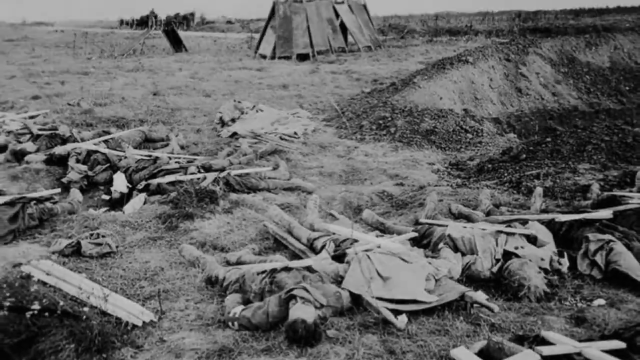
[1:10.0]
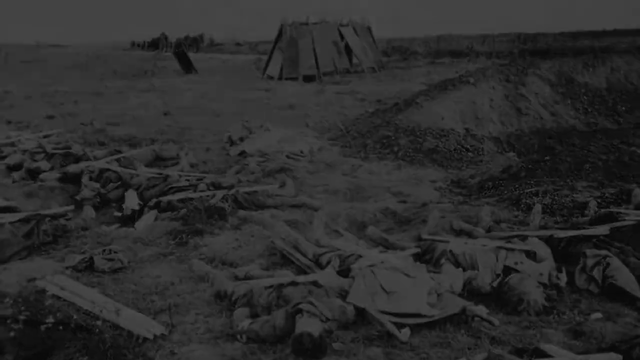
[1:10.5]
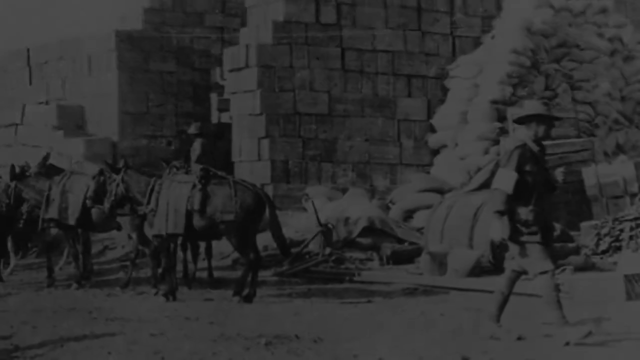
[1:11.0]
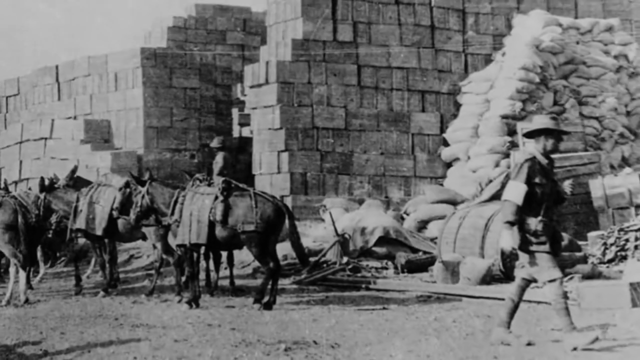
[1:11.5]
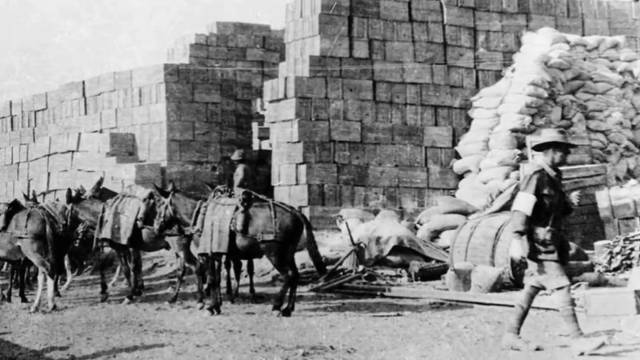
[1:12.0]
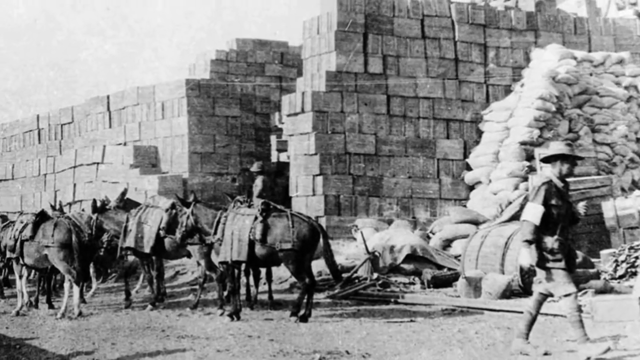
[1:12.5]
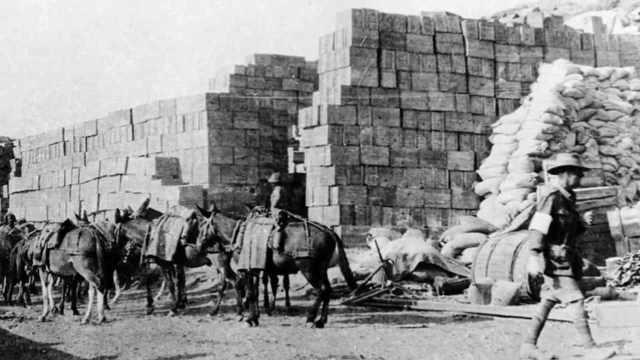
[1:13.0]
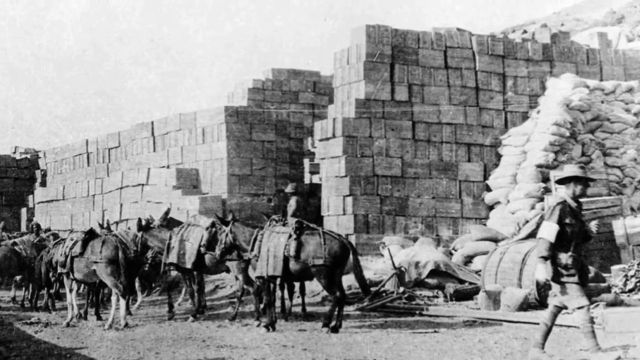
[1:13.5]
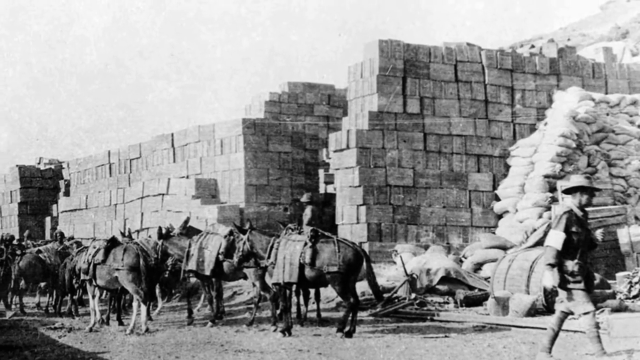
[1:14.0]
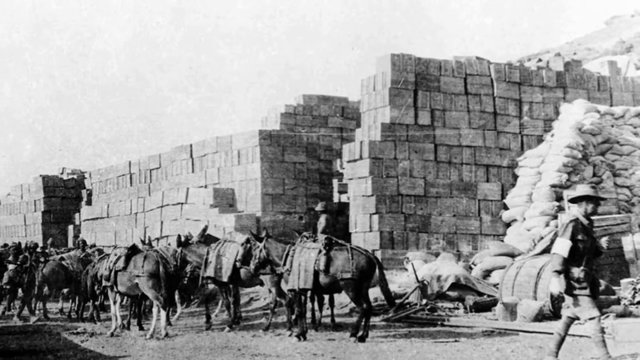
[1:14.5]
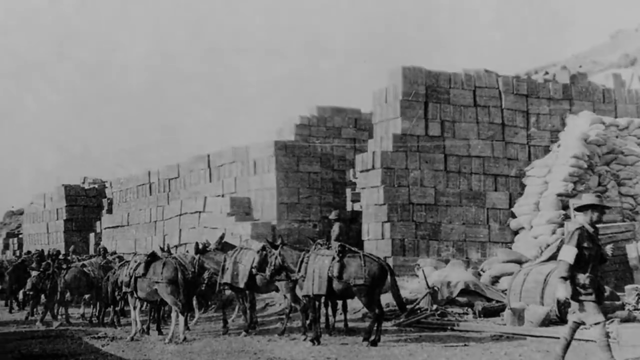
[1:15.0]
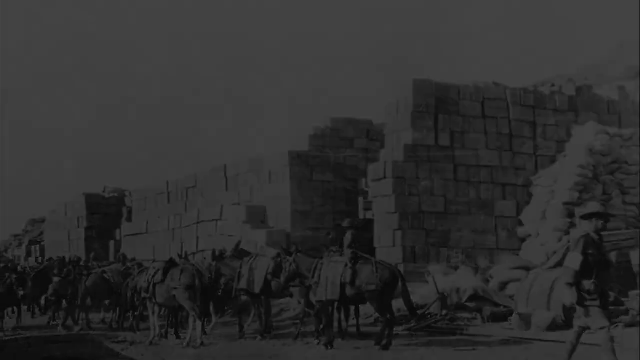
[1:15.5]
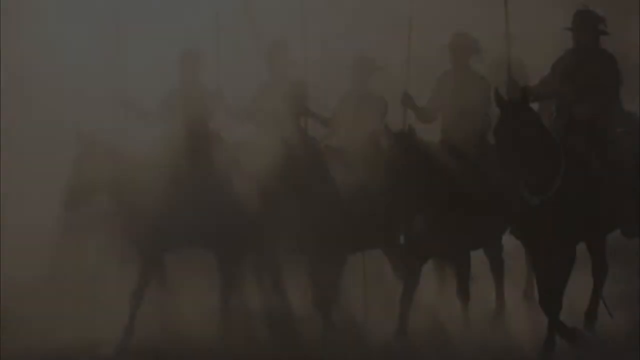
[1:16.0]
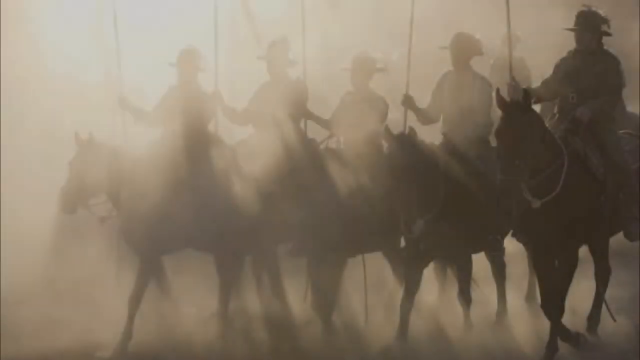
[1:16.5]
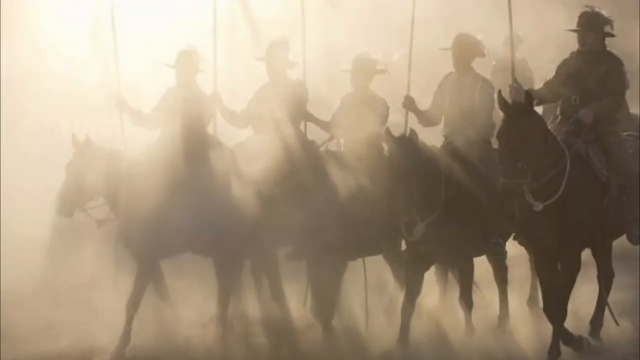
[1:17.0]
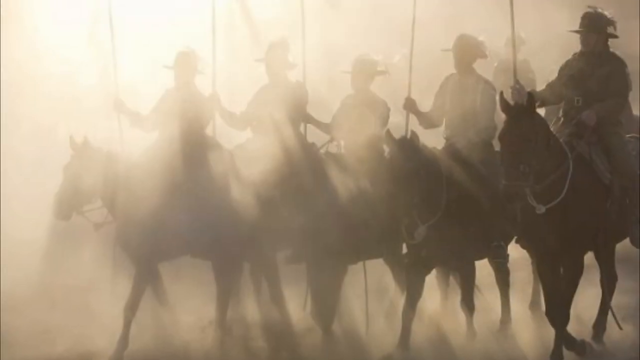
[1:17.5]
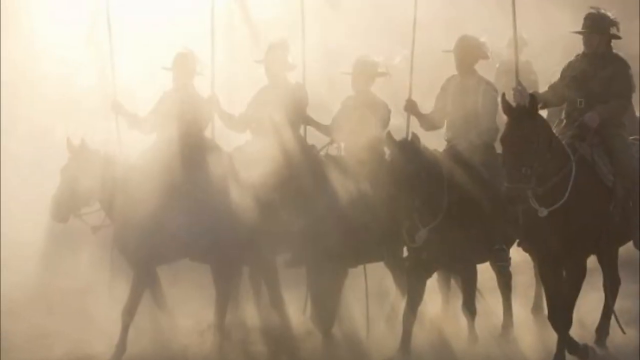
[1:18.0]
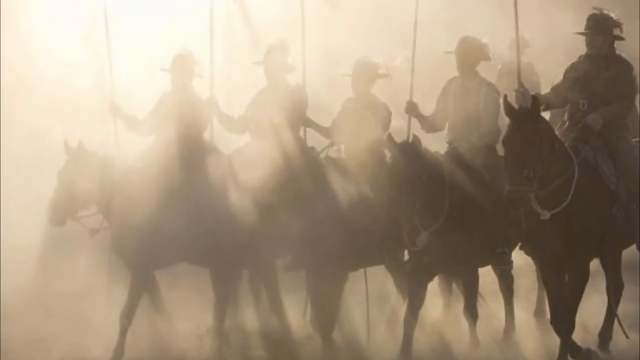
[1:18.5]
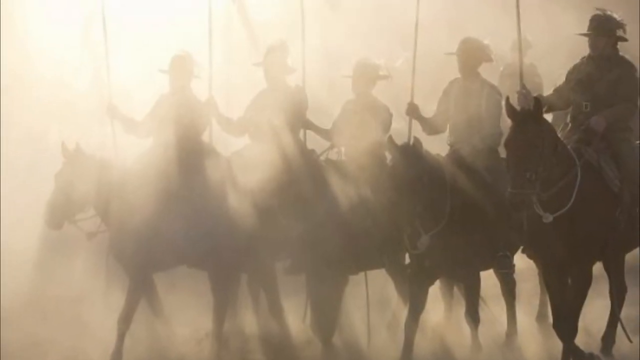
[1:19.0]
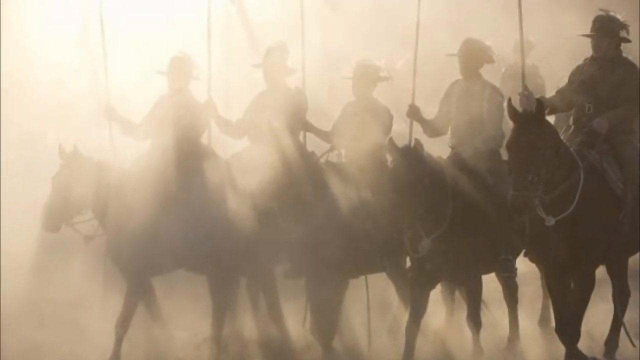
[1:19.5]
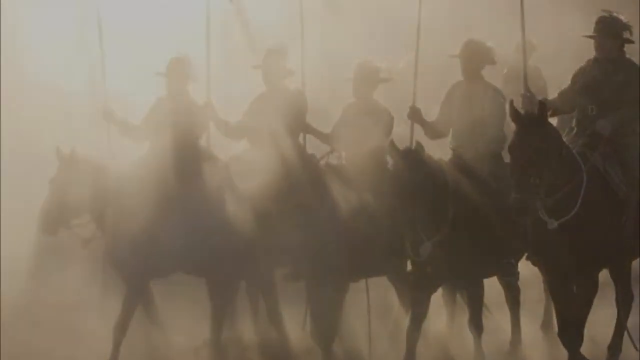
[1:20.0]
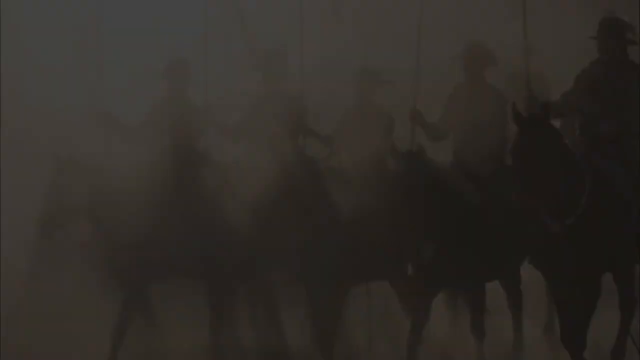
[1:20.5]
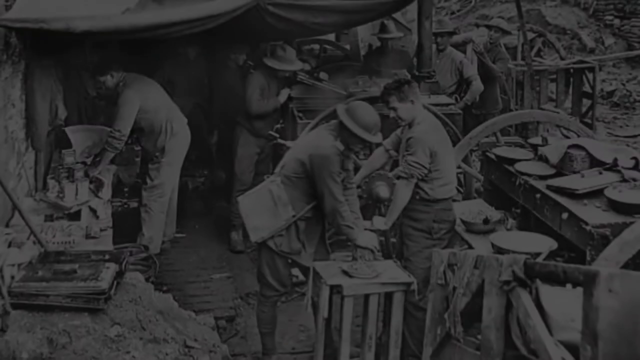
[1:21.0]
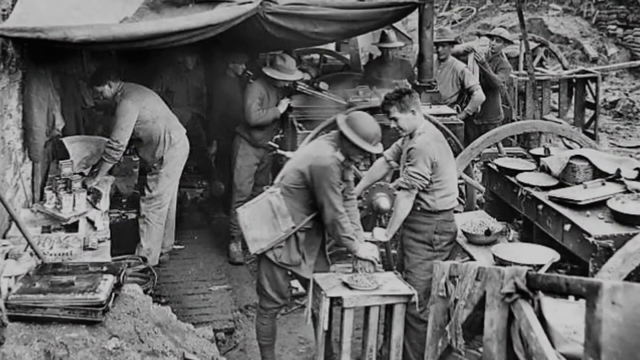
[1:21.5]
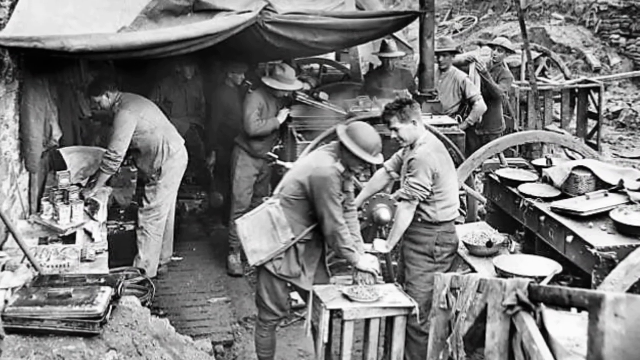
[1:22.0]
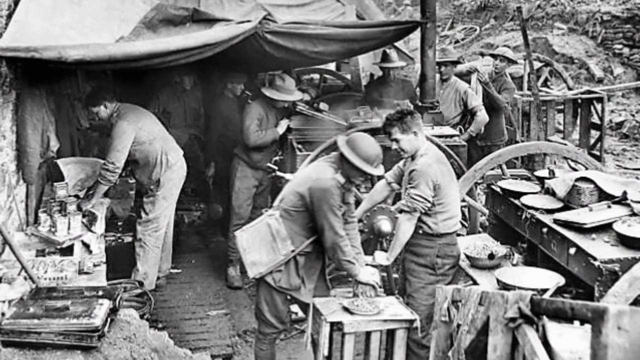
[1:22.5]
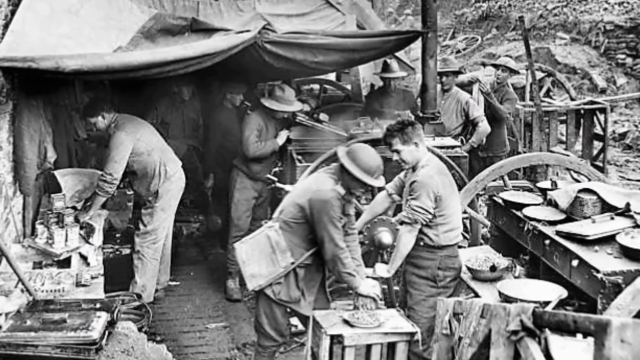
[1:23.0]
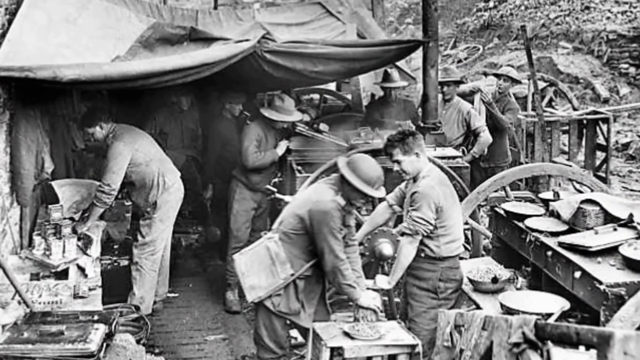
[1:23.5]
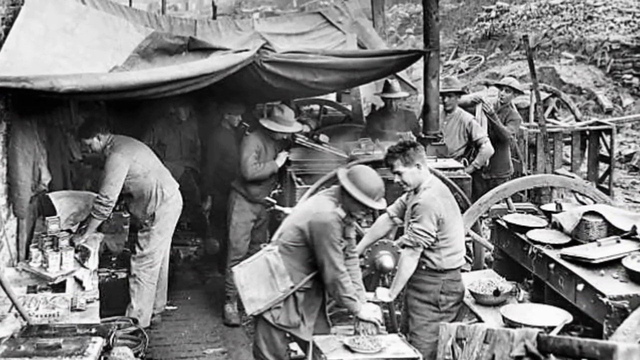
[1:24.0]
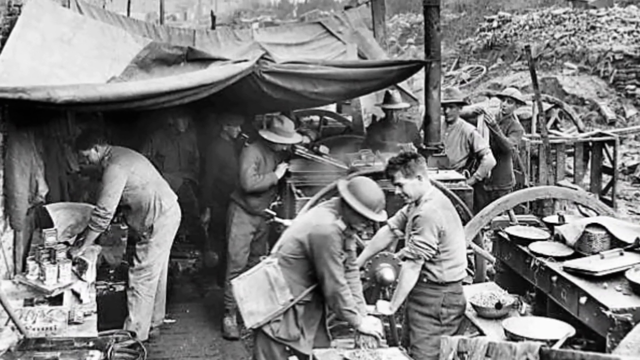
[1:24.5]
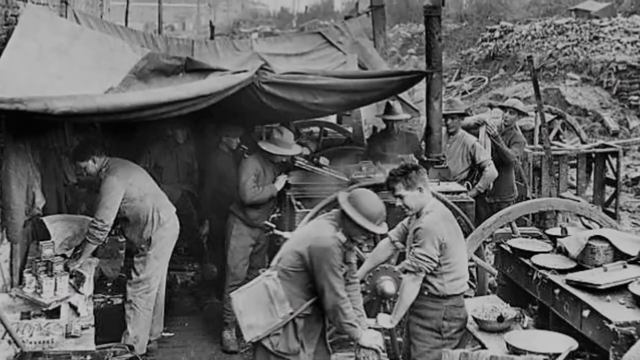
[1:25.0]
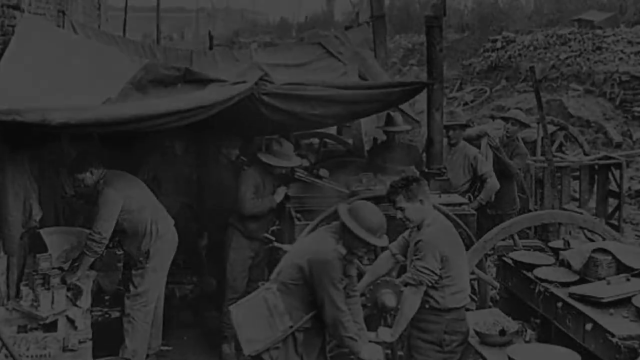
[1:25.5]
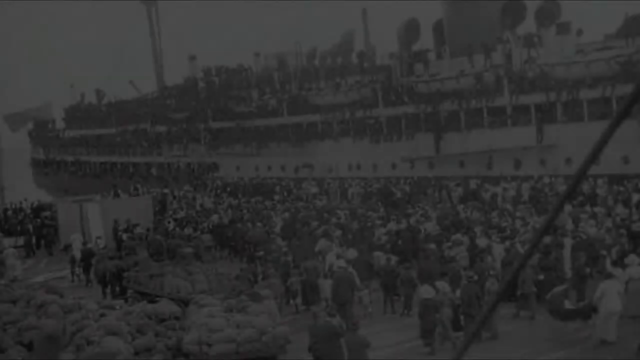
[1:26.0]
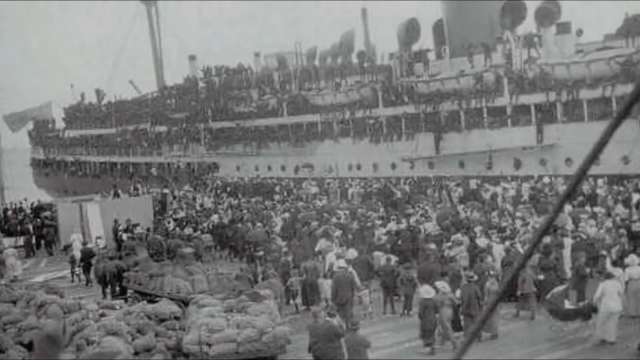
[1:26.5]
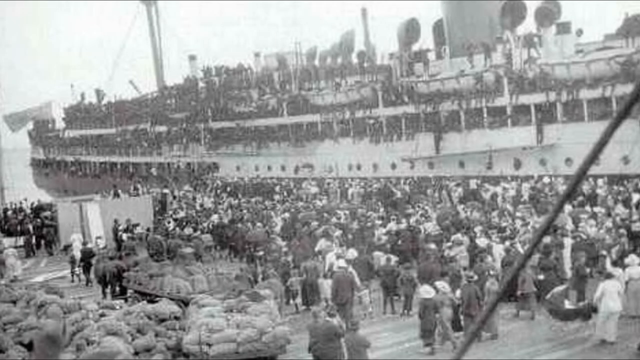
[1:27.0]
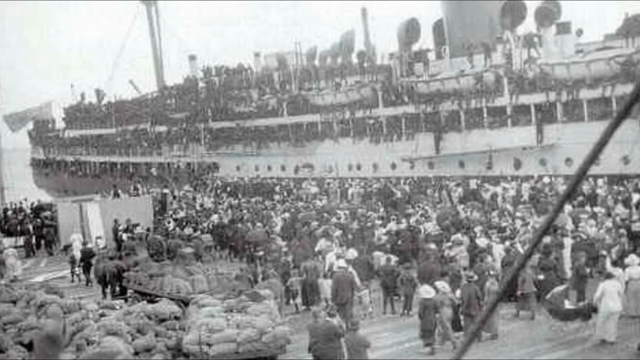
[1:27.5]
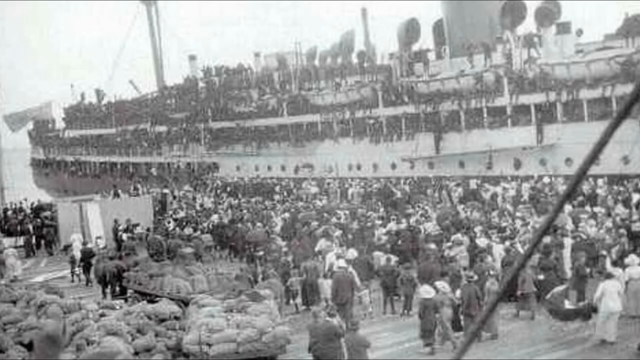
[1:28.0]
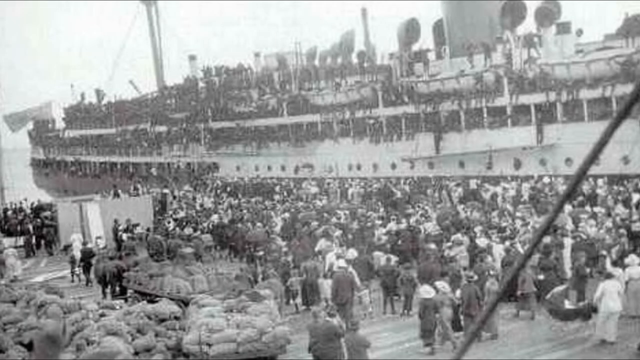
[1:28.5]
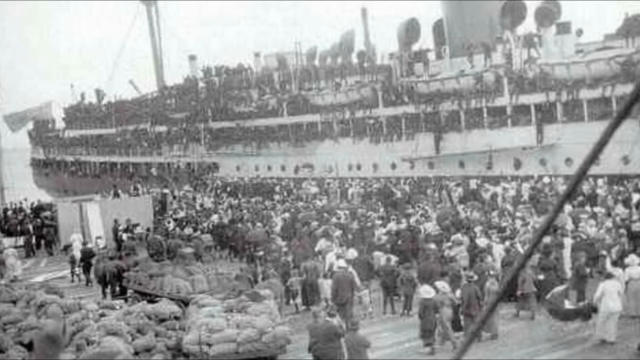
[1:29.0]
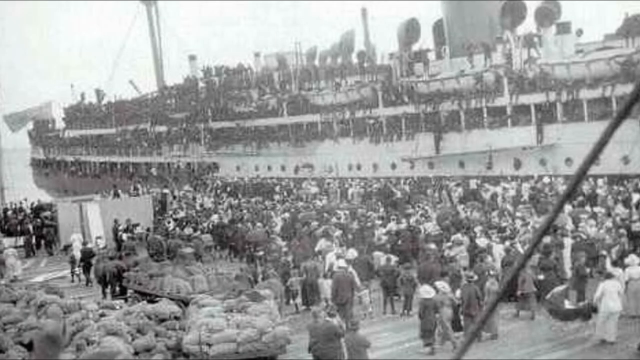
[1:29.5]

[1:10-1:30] A black and white image shows the aftermath of a battle, presumably during World War I or World War II. Multiple deceased men lie on the ground; most appear to be wearing military uniforms and have various bits of wood and debris tossed upon them. The surrounding area looks battle-torn, the ground torn up and barren. The view pans to a black and white image with multiple horses at the bottom left. In the background, hundreds of crates are stacked quite high. On the right, multiple bags of either sand or rice are stacked approximately 15 feet high. Men walk around and ride on the horses. Next is a black and white image of cavalry on the backs of approximately four or five horses. The men hold flag poles in their right hands and are dressed in military garb, each wearing a hat and each on saddleback. Then comes an image of soldiers in a camp who appear to be working machinery; some are cooking food and some are working on the machinery itself. There is a tent in the background and debris in the upper right of the background.